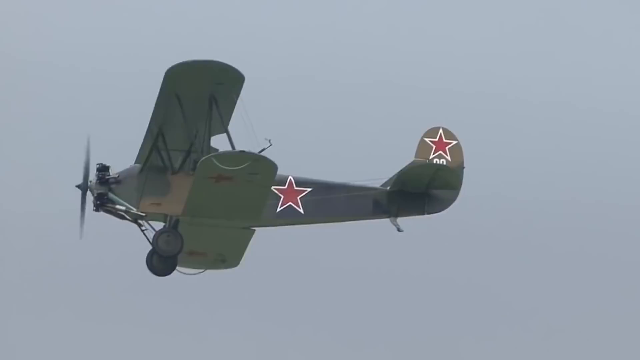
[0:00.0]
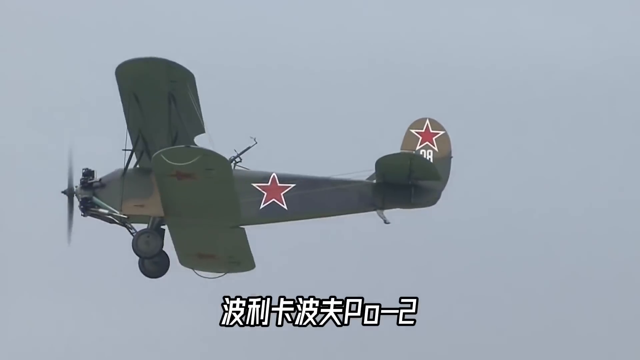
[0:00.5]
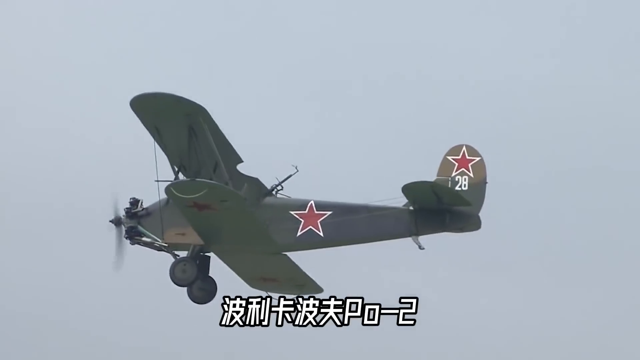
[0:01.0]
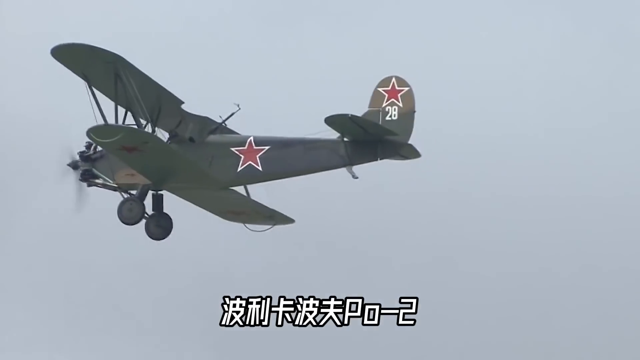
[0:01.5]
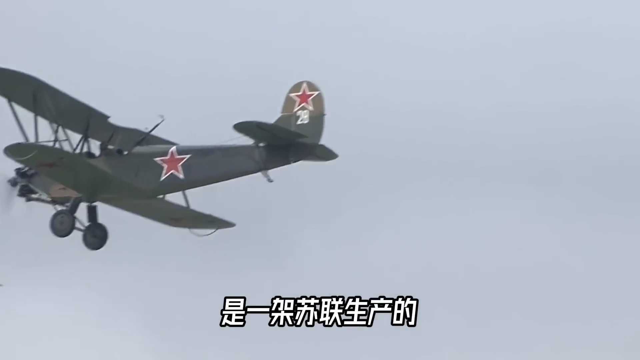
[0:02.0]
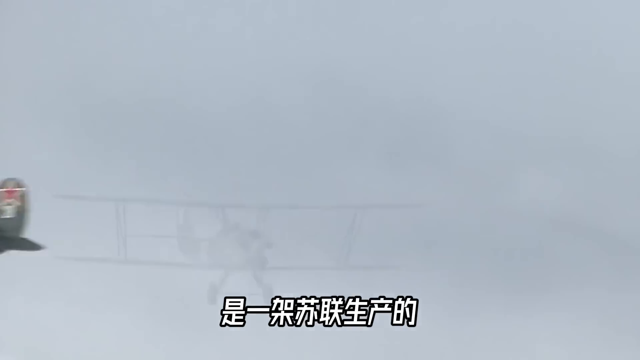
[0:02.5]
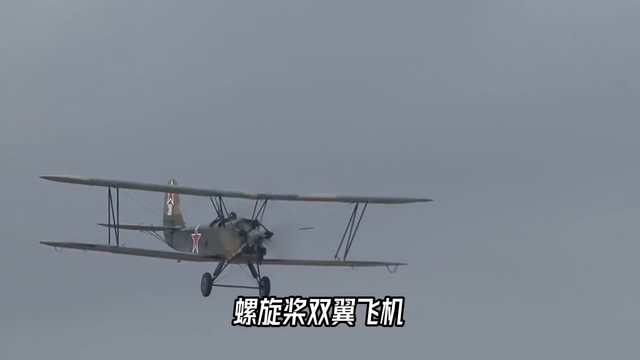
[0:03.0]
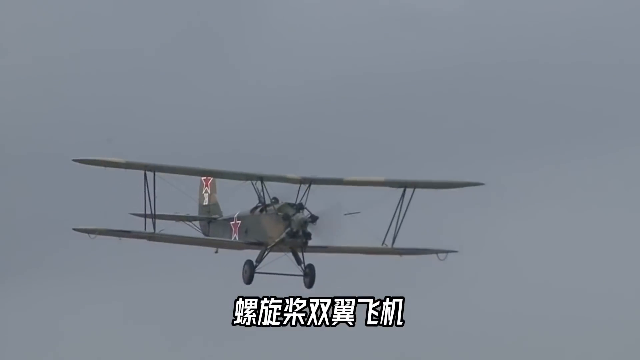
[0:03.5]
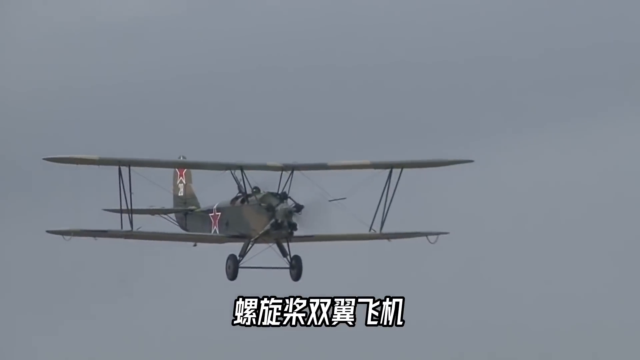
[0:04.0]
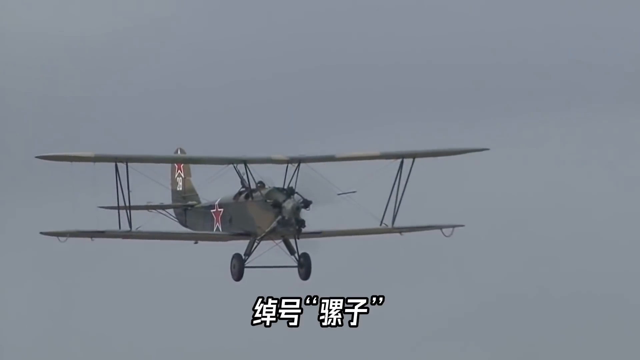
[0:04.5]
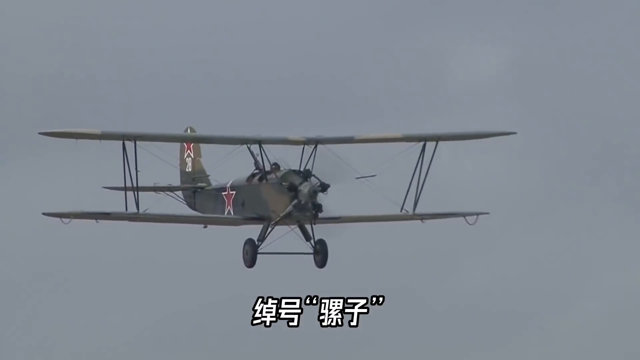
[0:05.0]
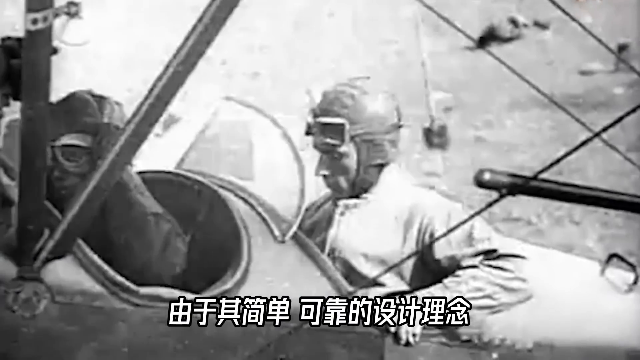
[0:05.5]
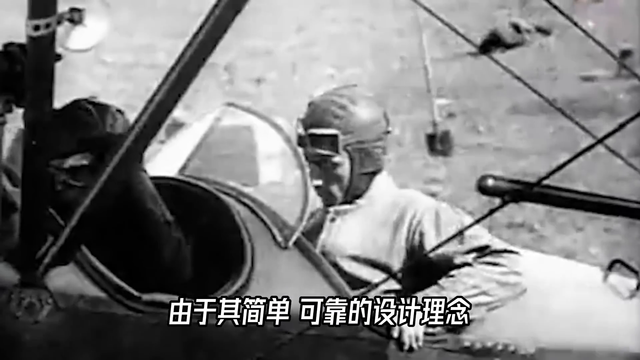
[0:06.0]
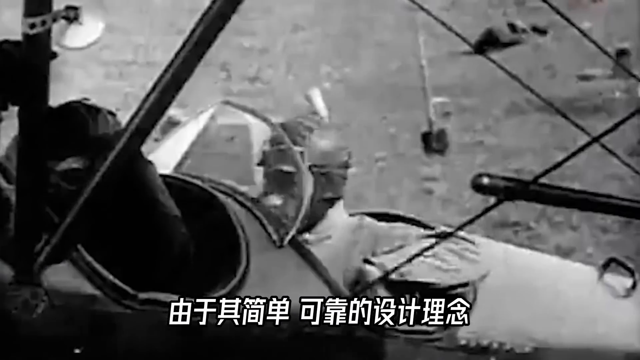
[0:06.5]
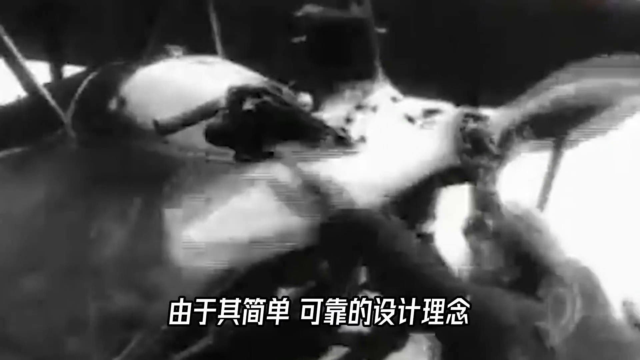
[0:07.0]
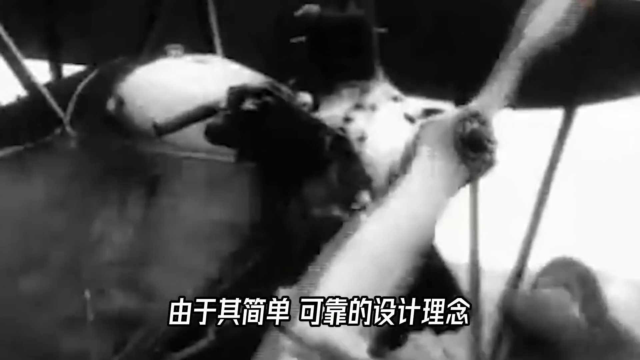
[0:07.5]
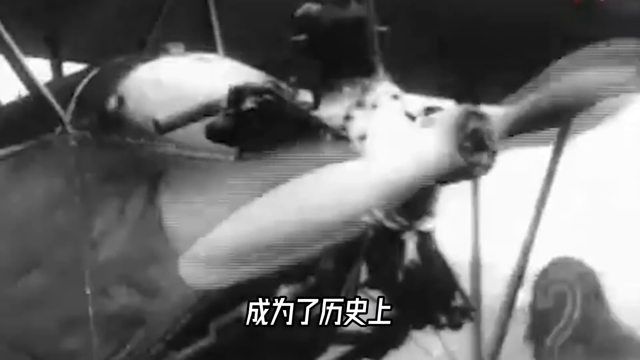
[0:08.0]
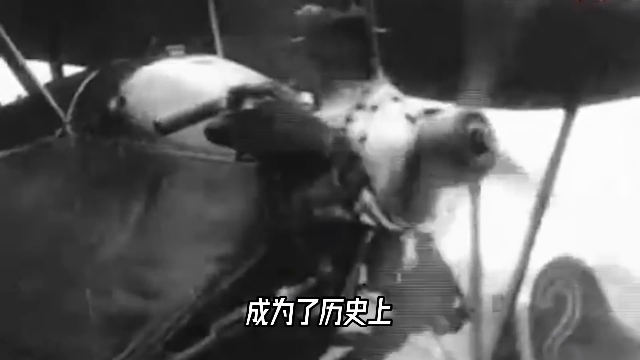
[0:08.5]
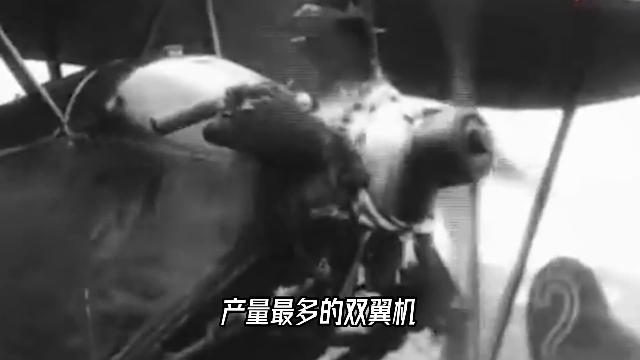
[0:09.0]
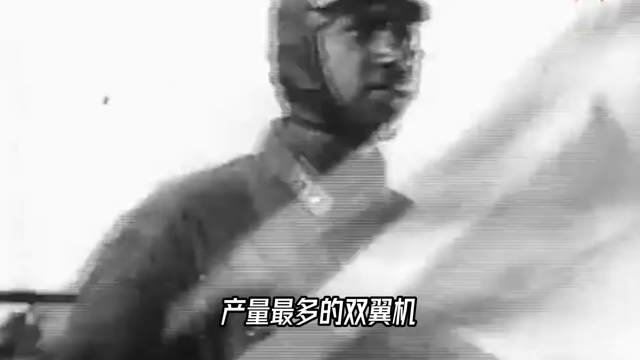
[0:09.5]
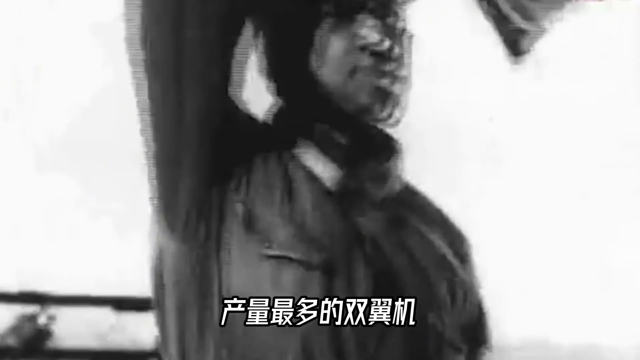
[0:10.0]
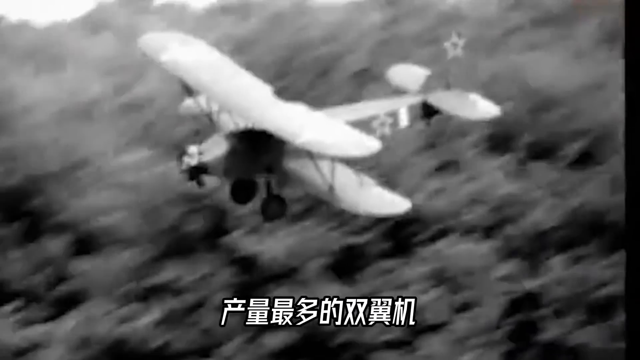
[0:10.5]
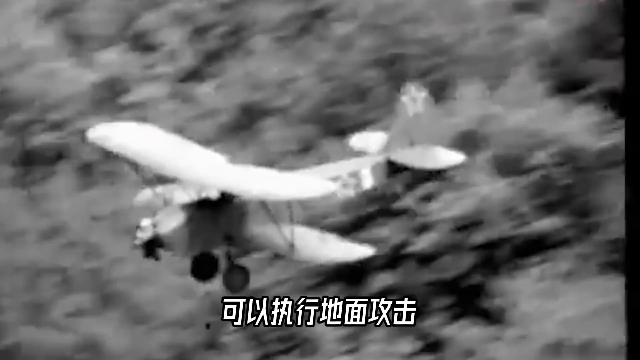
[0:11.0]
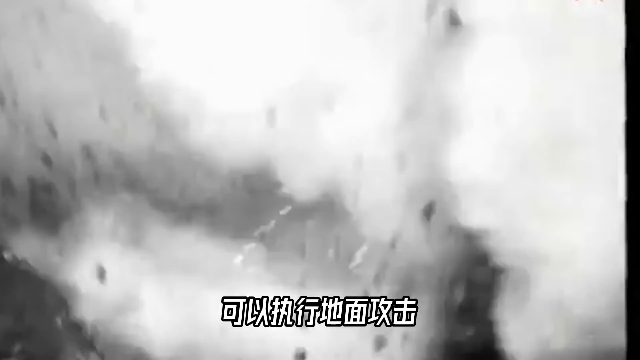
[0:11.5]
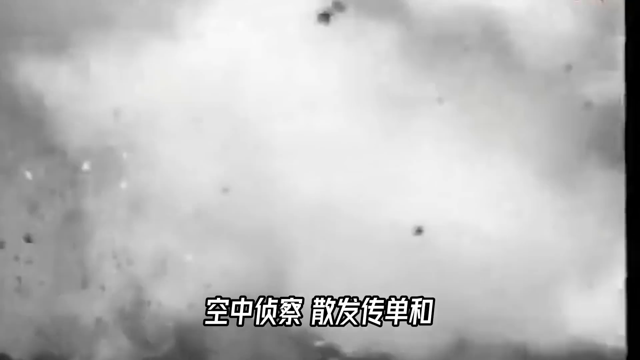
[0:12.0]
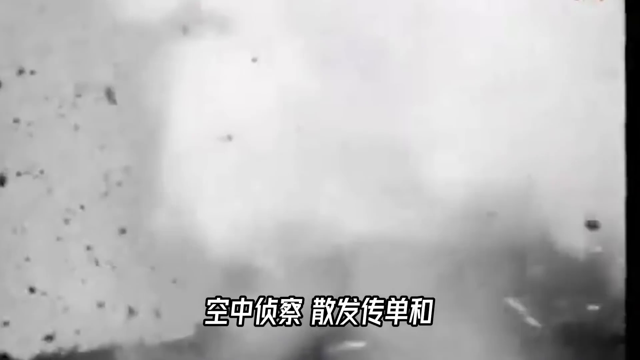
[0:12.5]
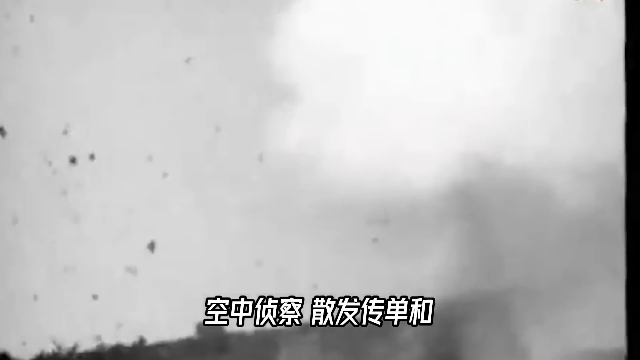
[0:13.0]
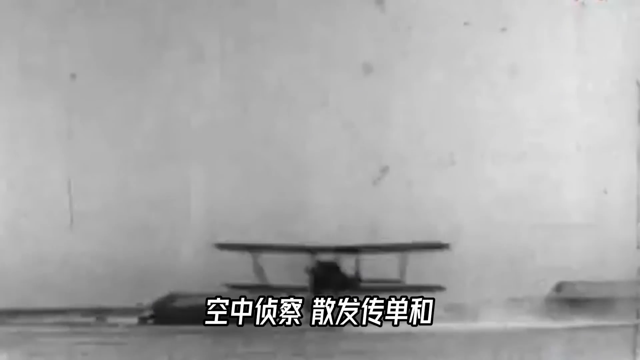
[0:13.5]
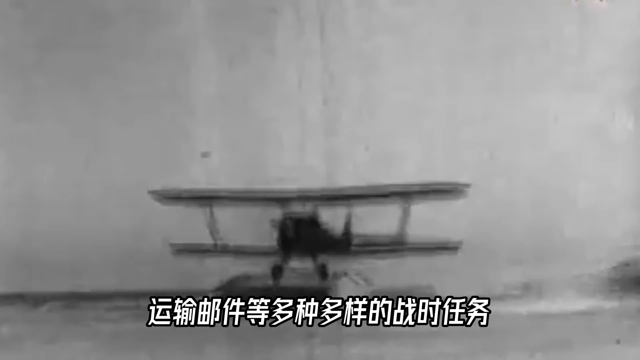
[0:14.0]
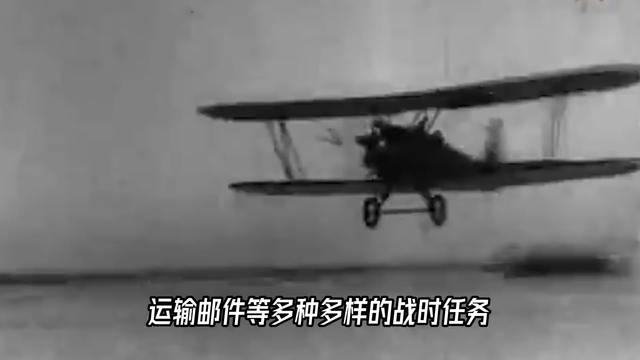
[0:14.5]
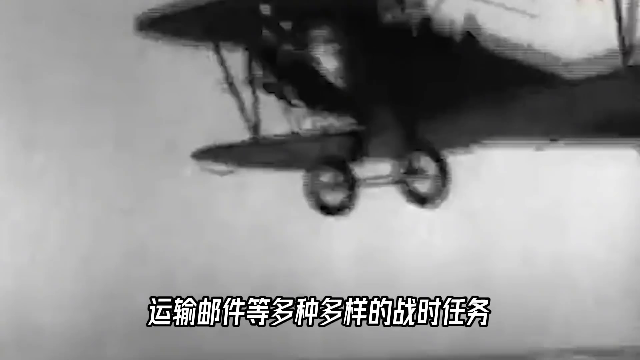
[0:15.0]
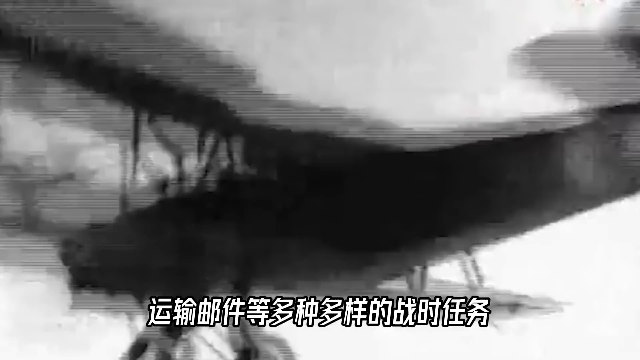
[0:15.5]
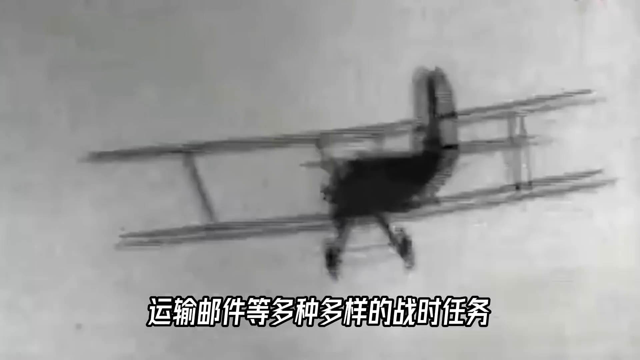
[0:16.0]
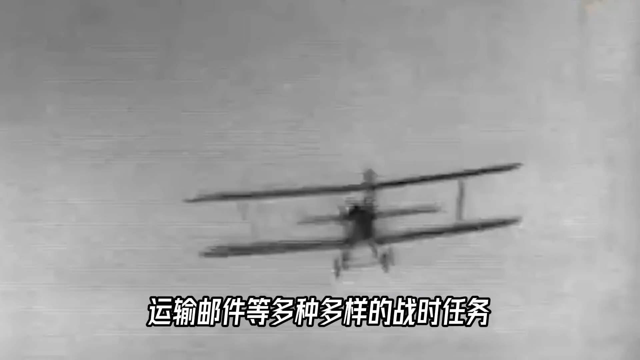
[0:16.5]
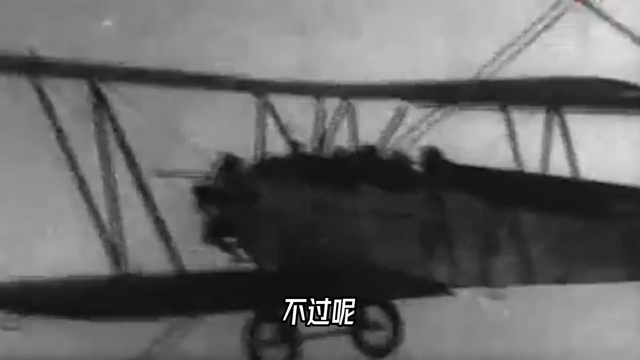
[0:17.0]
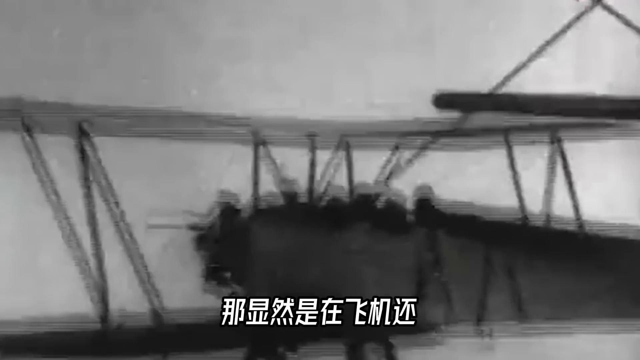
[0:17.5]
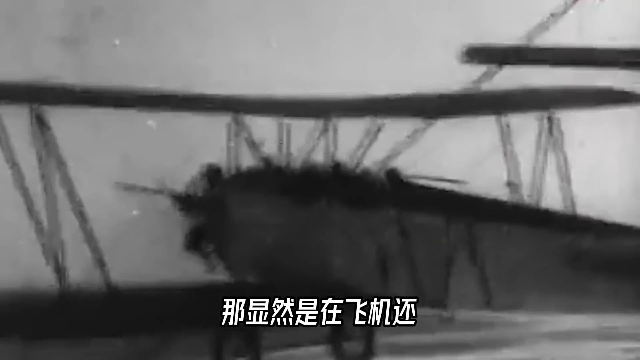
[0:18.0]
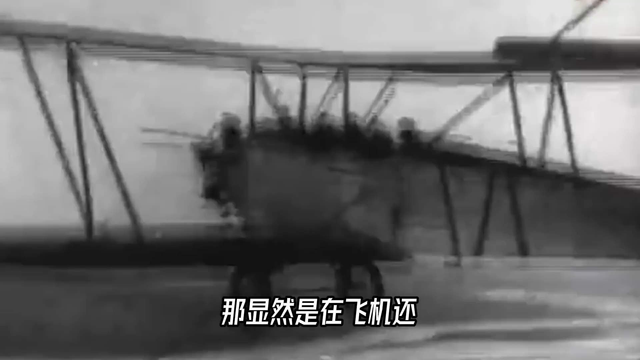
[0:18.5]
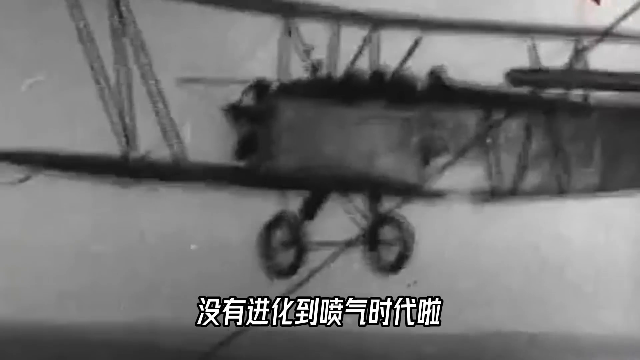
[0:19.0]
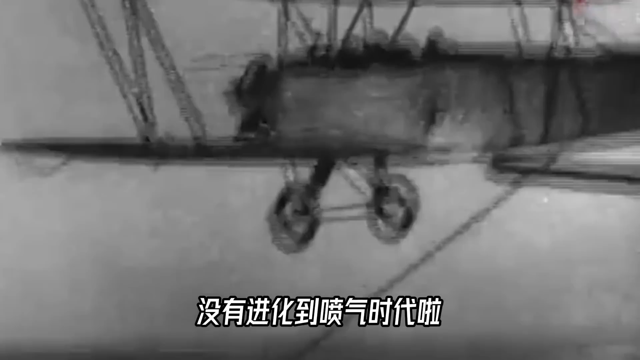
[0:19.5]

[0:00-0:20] An animated scene shows an old fighter plane with red stars on it flying through the sky. Text at the bottom of the screen, in what looks like Chinese or Japanese, ends with the number 2. The video then switches to very old black-and-white footage of the propeller of a similar plane spinning, with continued text at the bottom in what could be Japanese. The plane is shown flying, followed by a large explosion, also in black and white. Another similar propeller plane flies across the screen as the text at the bottom changes. Further black-and-white close-up images of the planes follow. Judging by the style of the footage, the plane seems to be a warplane, perhaps from World War II.